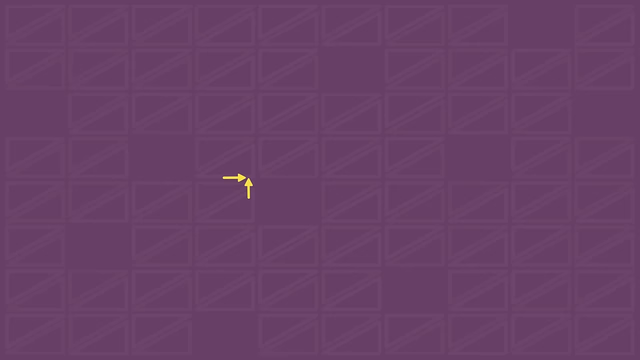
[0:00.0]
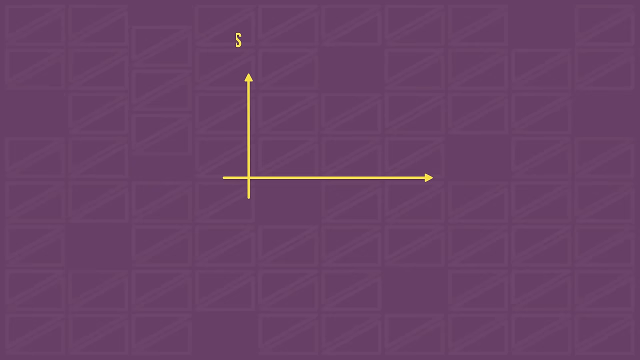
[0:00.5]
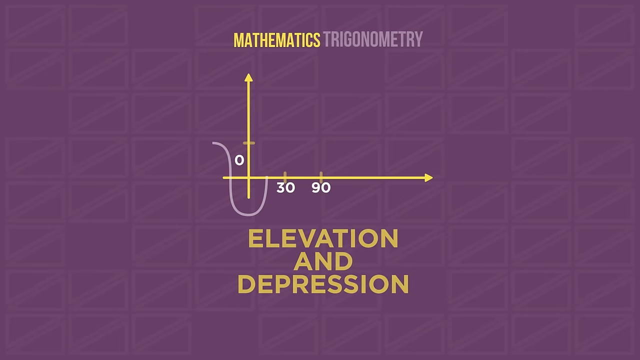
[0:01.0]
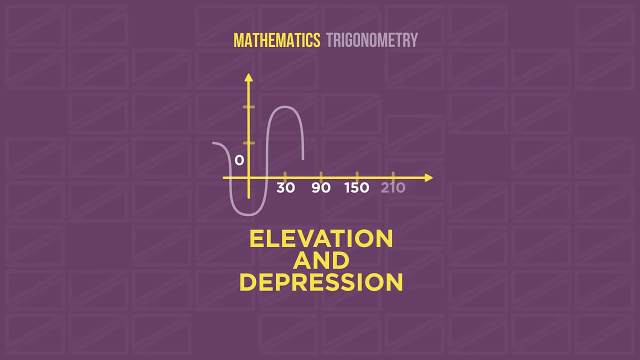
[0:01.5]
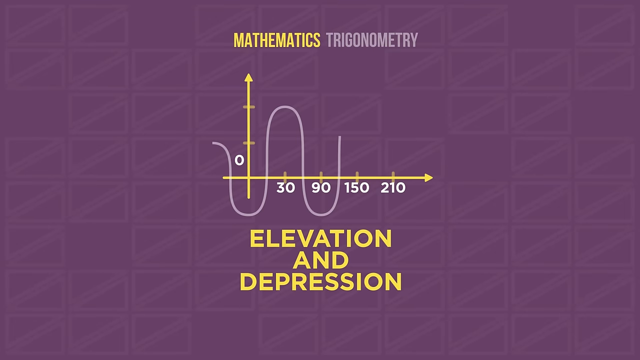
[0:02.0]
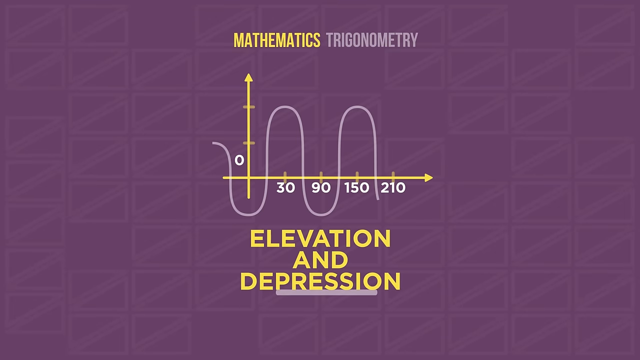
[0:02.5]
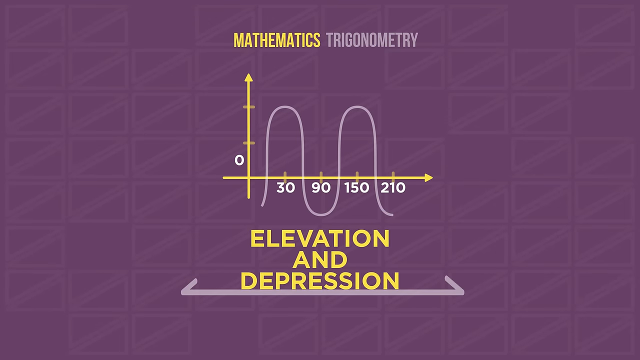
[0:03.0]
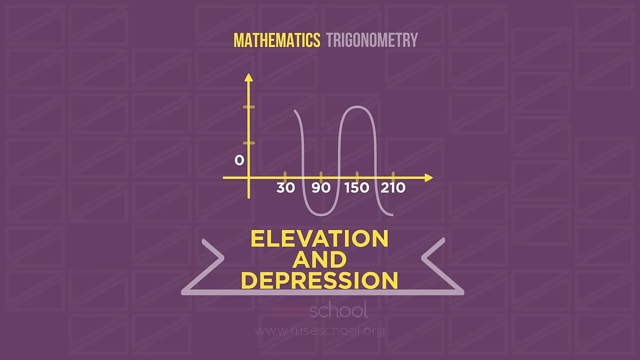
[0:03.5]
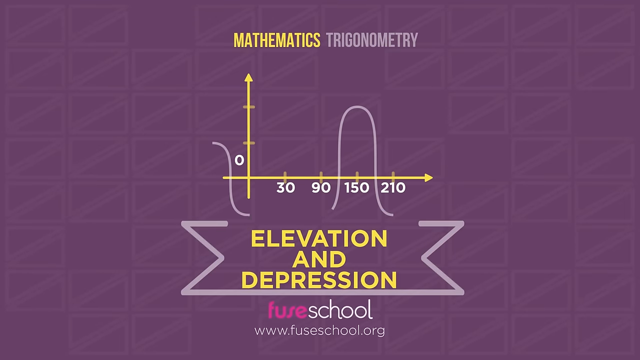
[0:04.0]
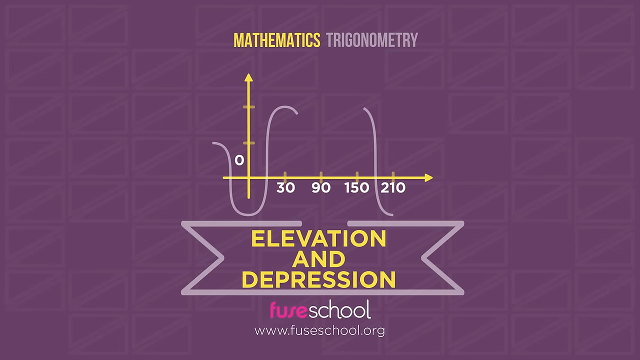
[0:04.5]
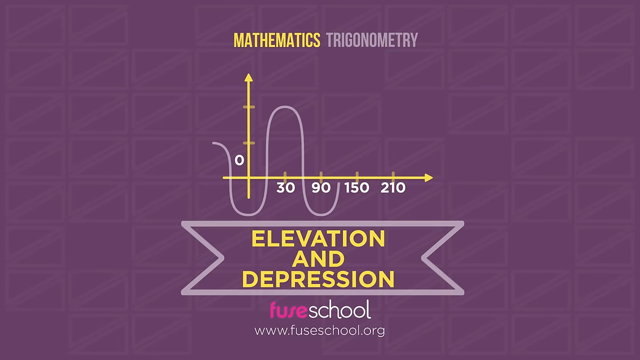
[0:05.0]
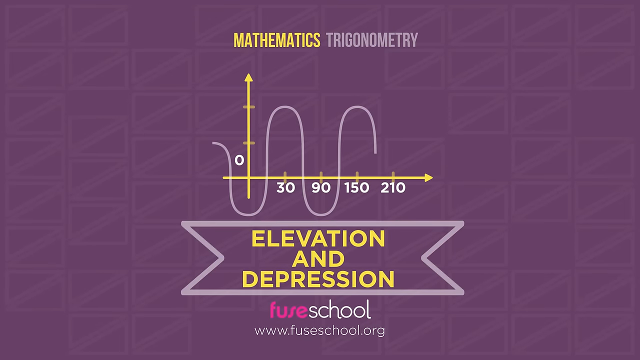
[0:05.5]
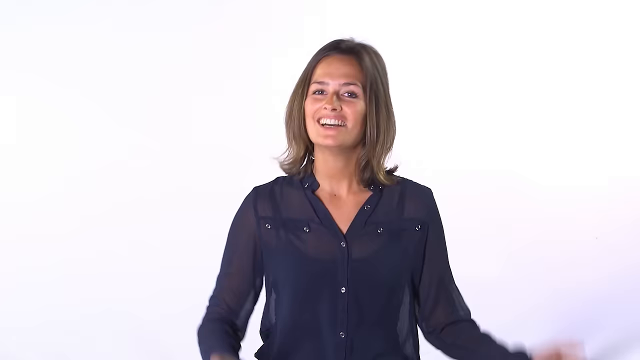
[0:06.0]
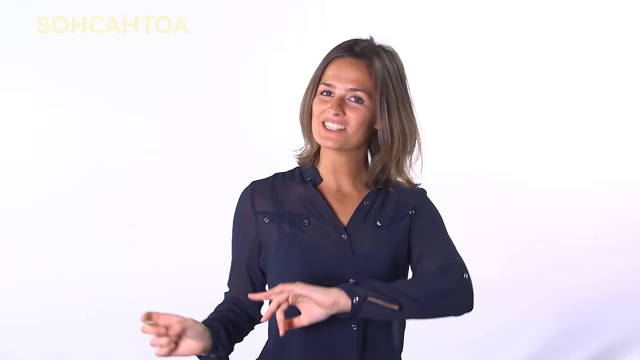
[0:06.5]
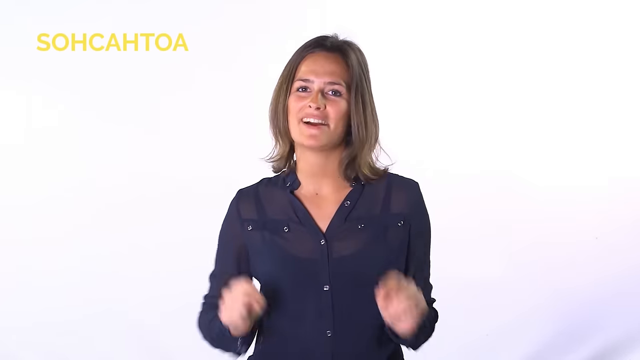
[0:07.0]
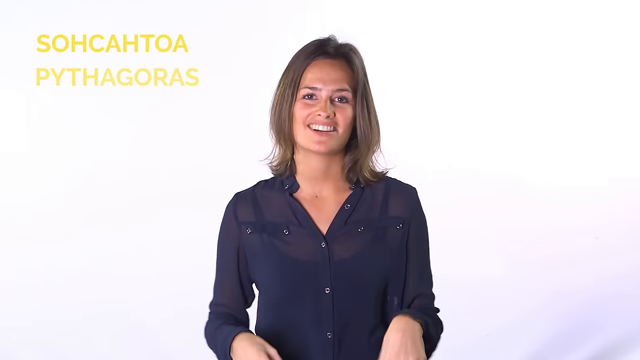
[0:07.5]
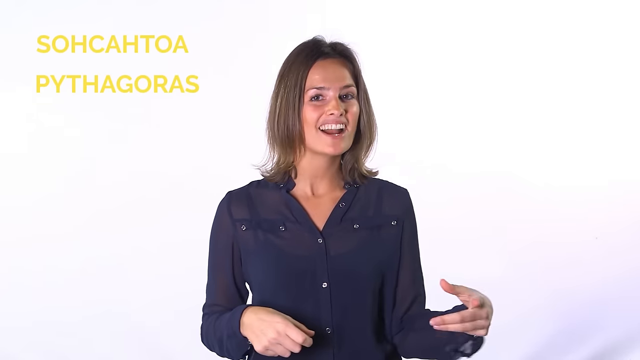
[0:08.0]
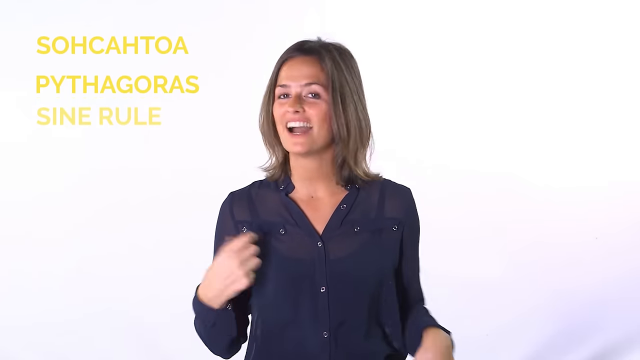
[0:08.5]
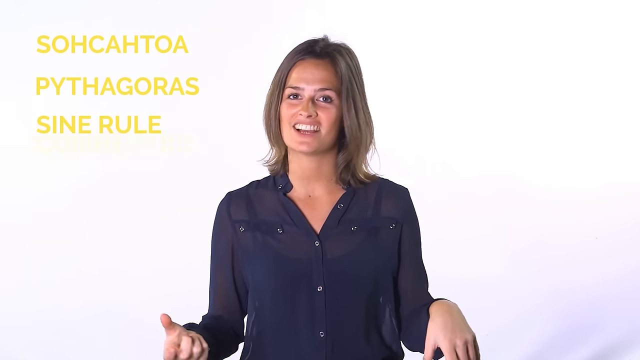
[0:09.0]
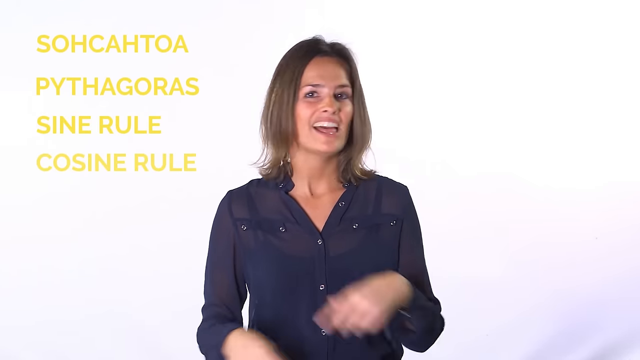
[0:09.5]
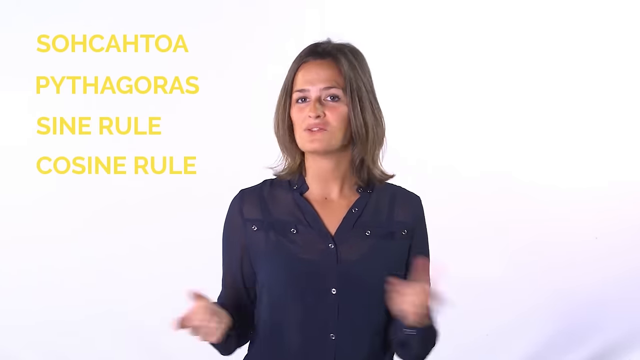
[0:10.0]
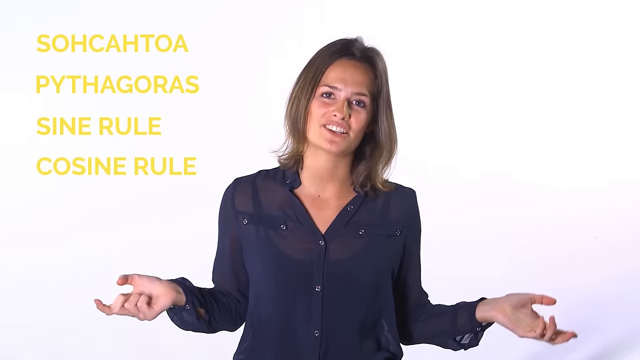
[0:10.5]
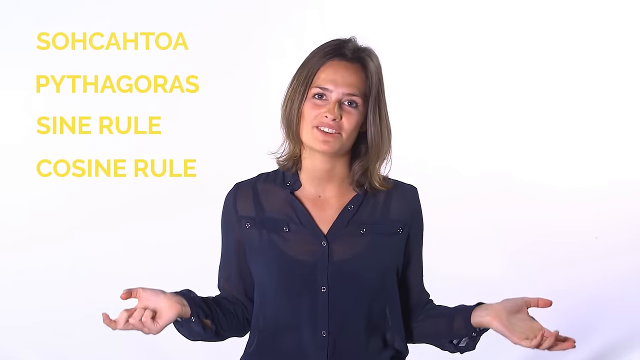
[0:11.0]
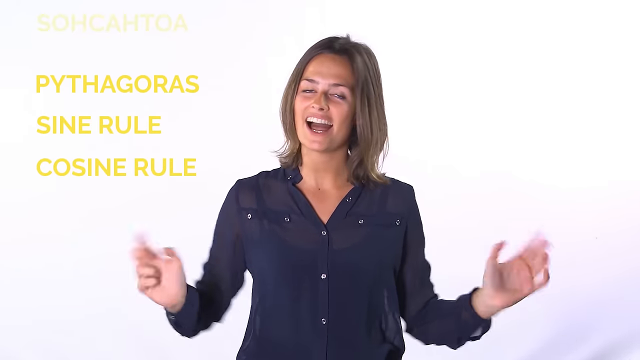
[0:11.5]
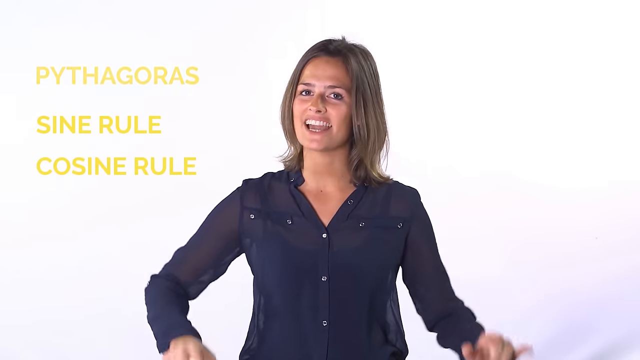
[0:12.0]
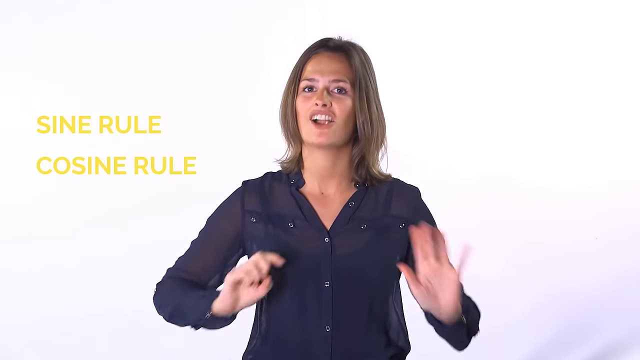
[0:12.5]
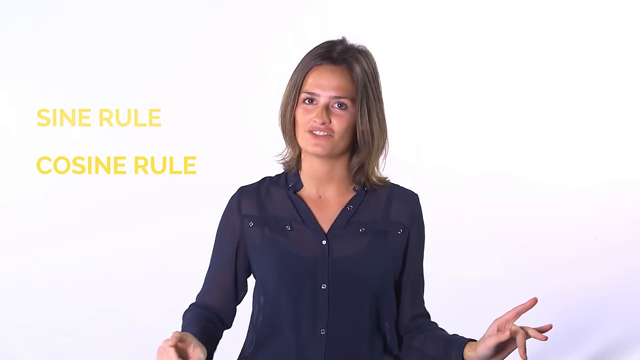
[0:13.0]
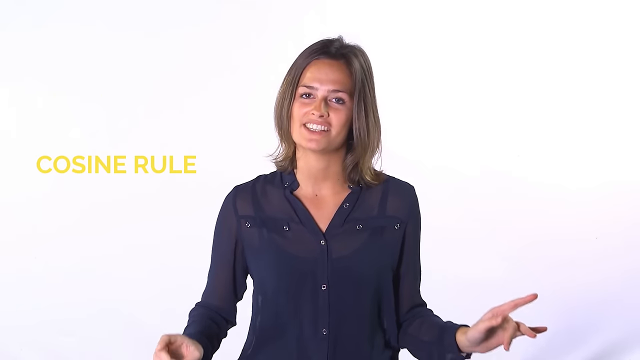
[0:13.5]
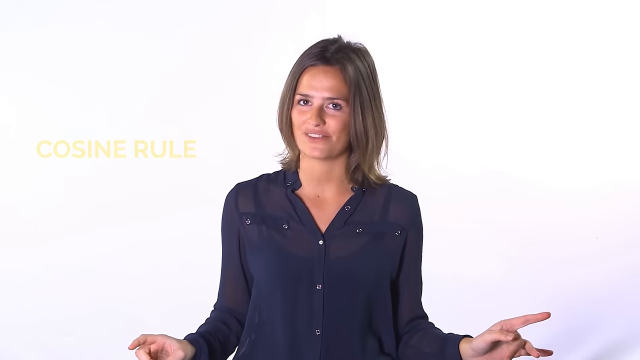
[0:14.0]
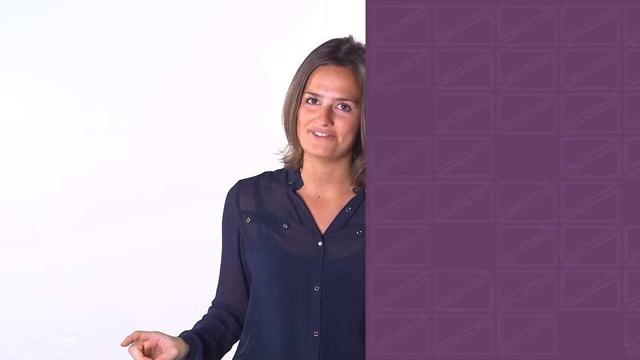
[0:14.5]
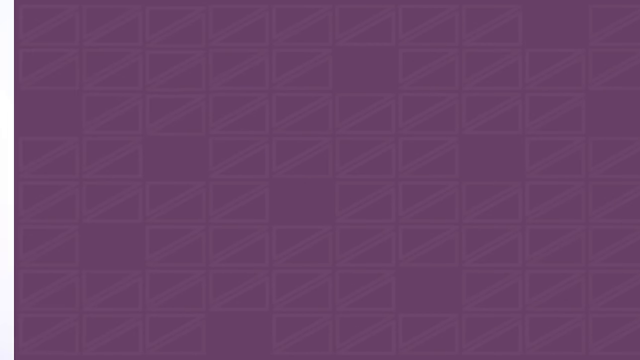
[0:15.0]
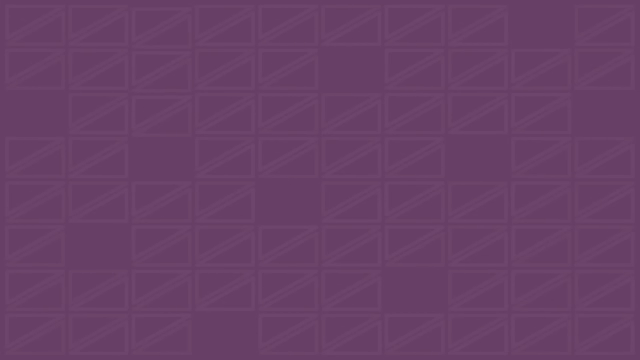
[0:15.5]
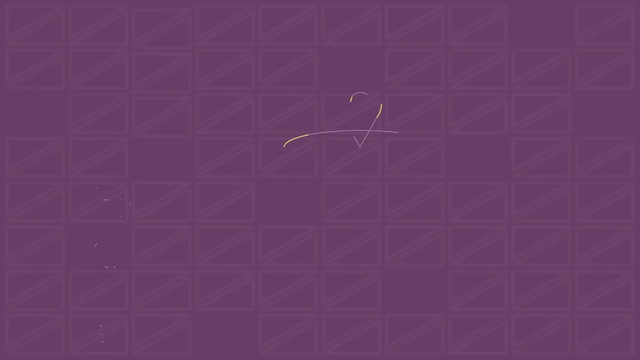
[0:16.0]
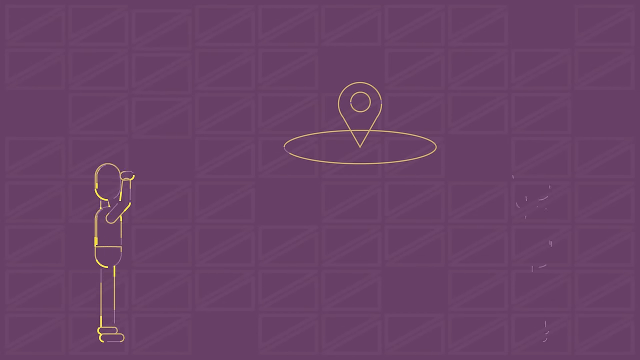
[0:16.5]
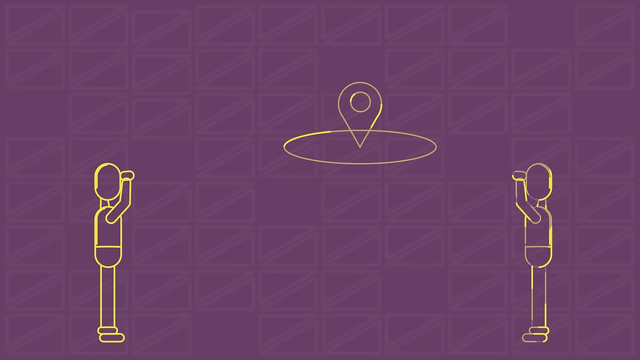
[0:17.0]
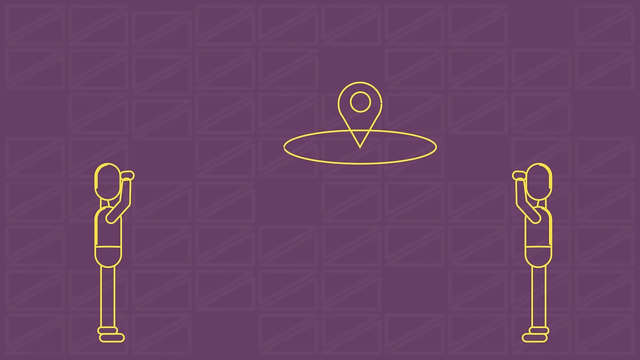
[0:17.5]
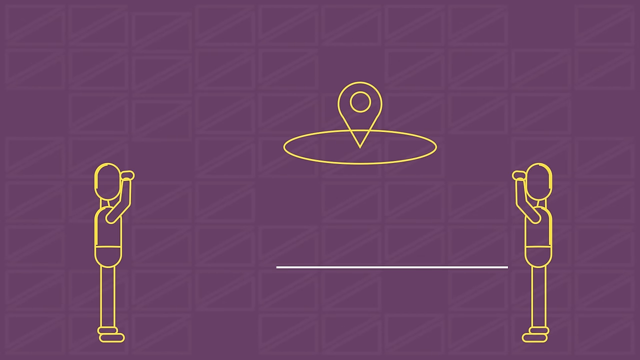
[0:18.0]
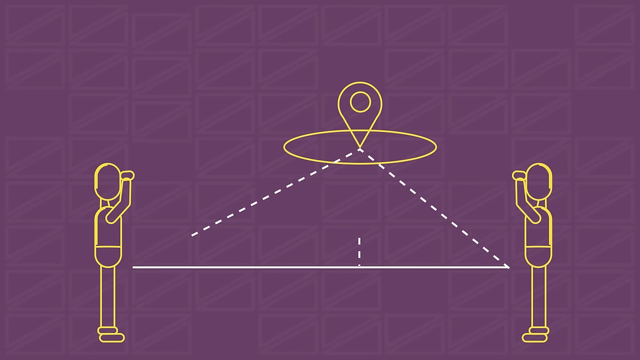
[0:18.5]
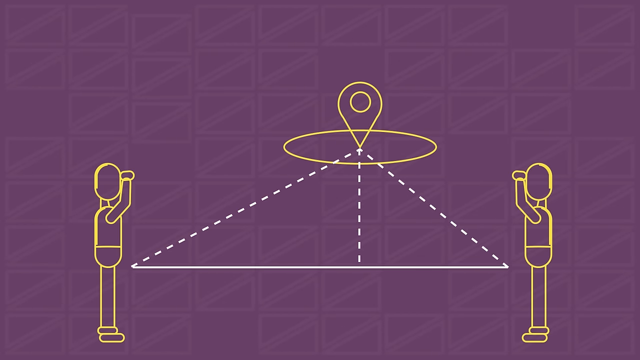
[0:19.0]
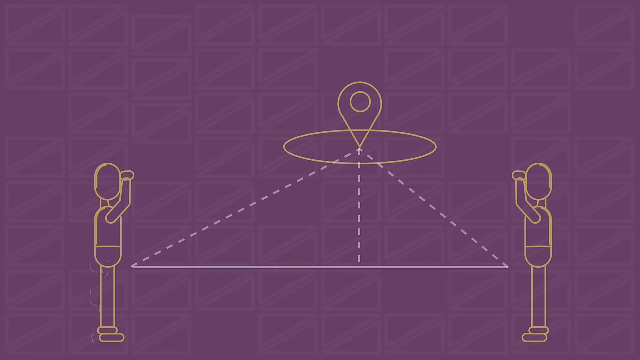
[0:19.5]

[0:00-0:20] The video opens on a purple screen with abstract triangle shapes in the background forming a texture. Two yellow lines are drawn, one vertically and one horizontally; the vertical line has an arrow at the top and the horizontal line has an arrow at the right. Text reads "mathematics, trigonometry, elevation, and depression," and what looks like a sine wave is drawn along the x-axis. At the bottom, text reads "this video is by Fuse School" along with their website address. A woman then speaks in front of the camera. She has brown hair and wears a blue button-up blouse. She holds both hands in front of her chest, out to her right side, then brings them to the center of her body. Her hands are folded like fists, her right hand hovering in front of her stomach while her left hand dangles out in front of her. She appears to make circling motions with her hands as she speaks. She brings both hands in front of her chest with her index finger pointing, then holds her hands out to her sides with palms up and elbows bent at 90 degrees, and shrugs her shoulders a little. Her head is tilted slightly to the left.